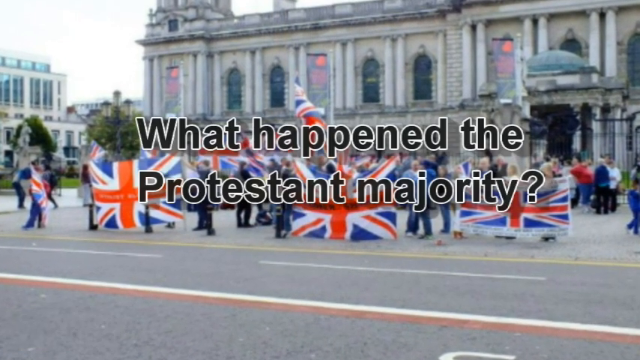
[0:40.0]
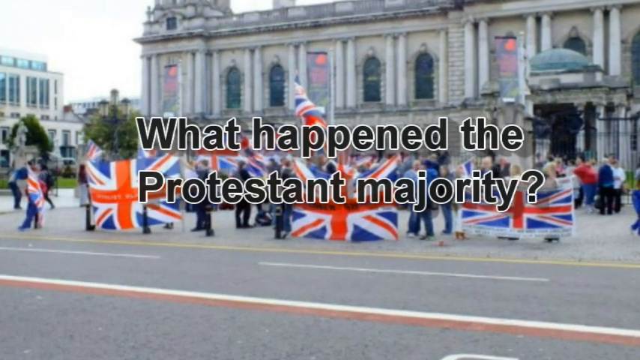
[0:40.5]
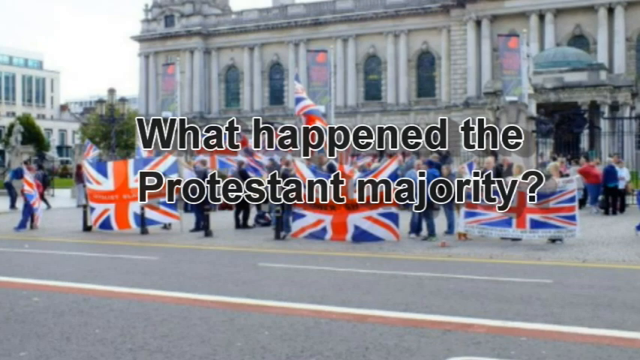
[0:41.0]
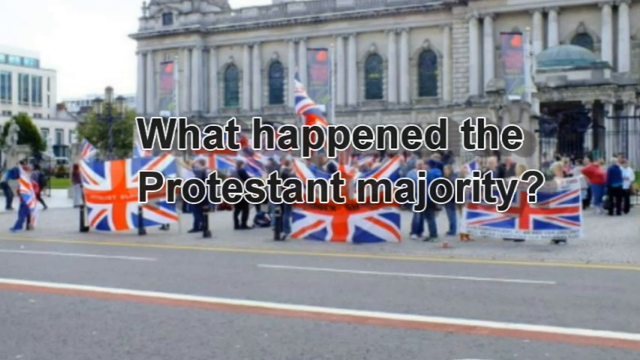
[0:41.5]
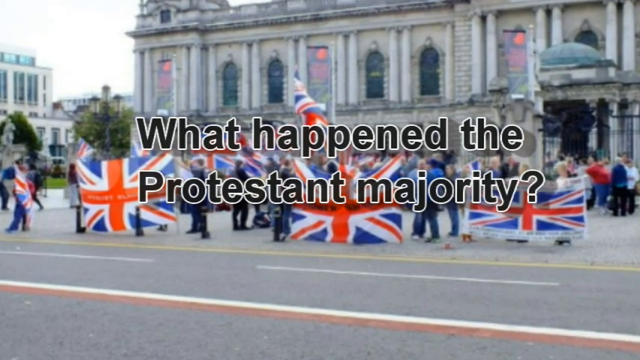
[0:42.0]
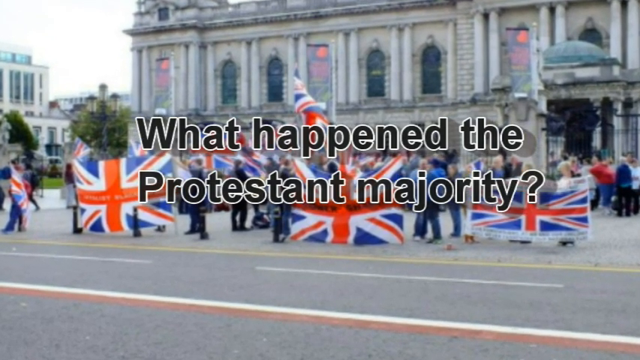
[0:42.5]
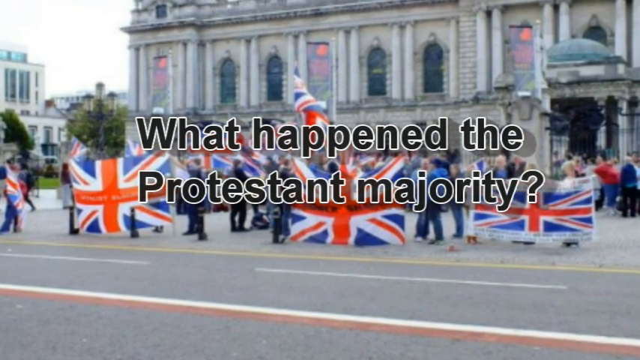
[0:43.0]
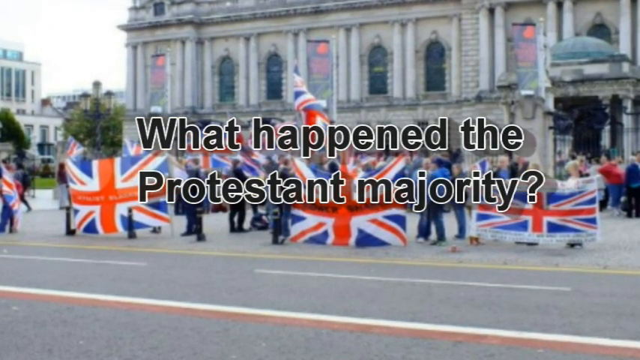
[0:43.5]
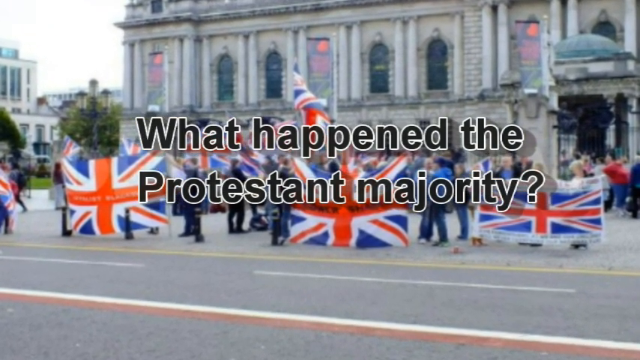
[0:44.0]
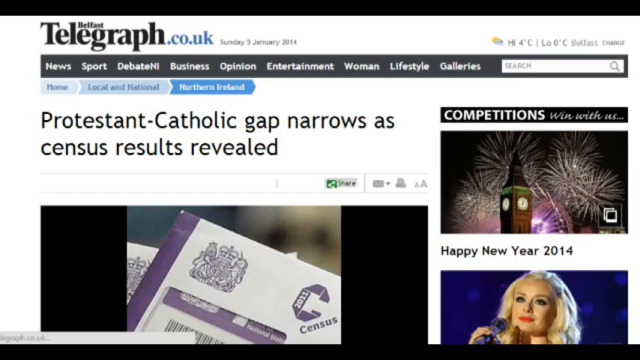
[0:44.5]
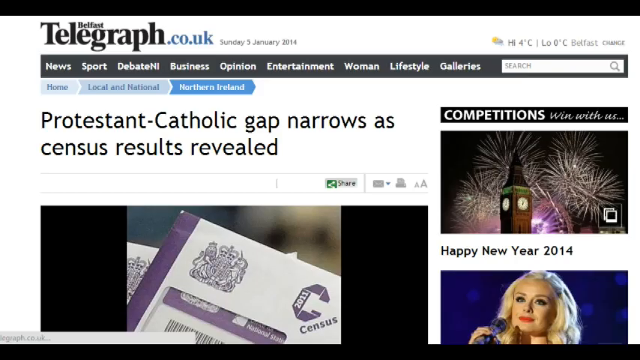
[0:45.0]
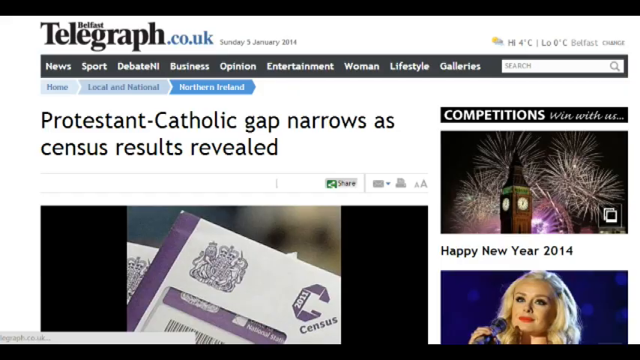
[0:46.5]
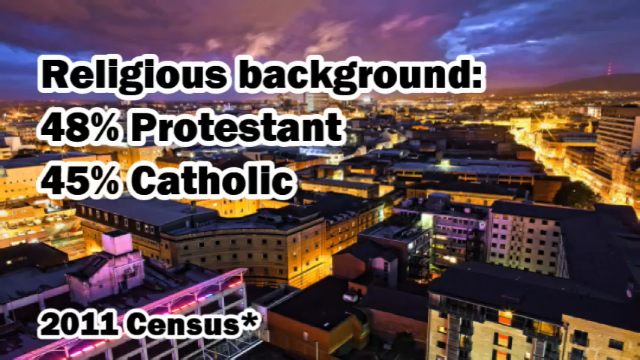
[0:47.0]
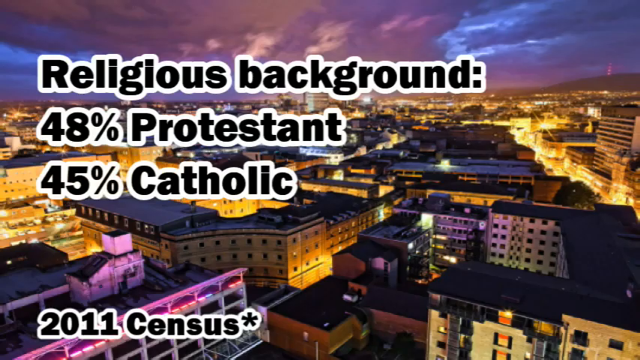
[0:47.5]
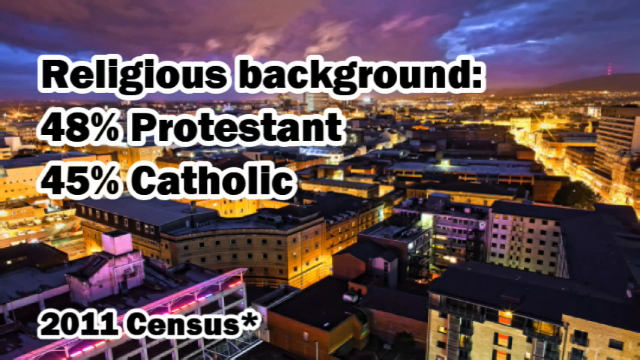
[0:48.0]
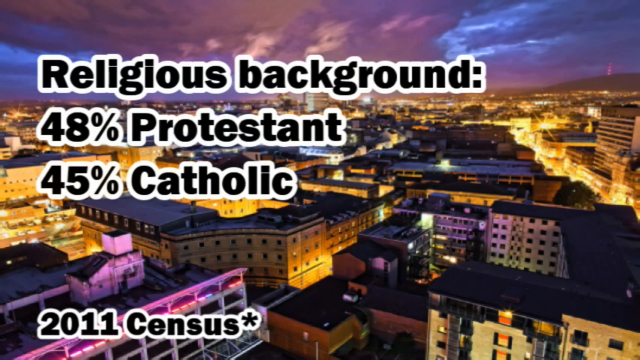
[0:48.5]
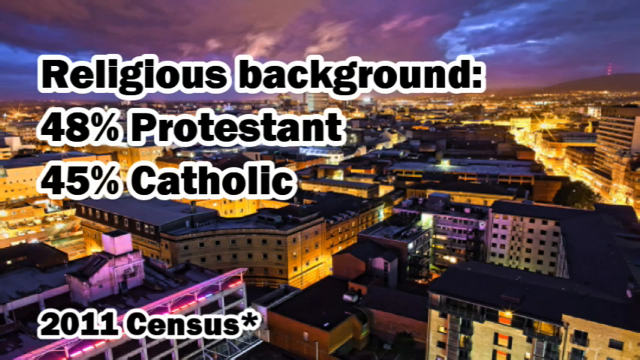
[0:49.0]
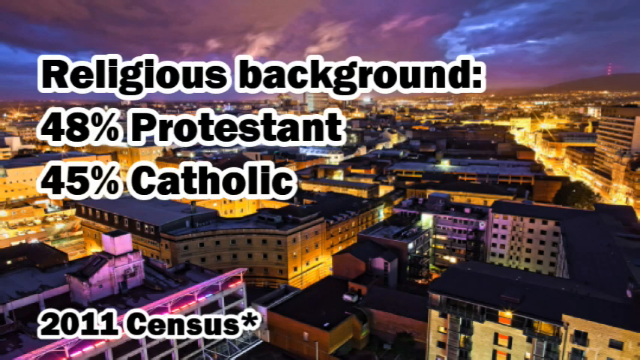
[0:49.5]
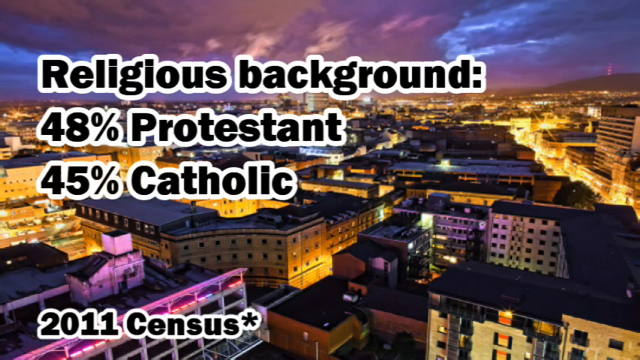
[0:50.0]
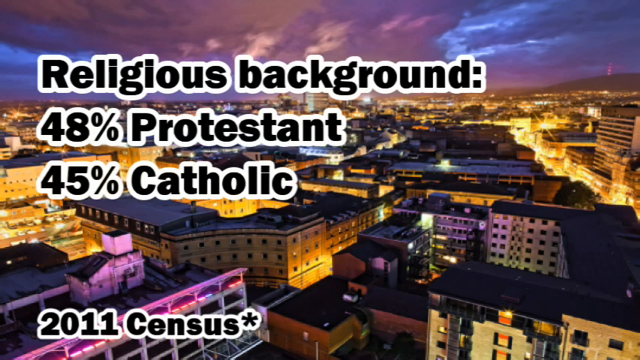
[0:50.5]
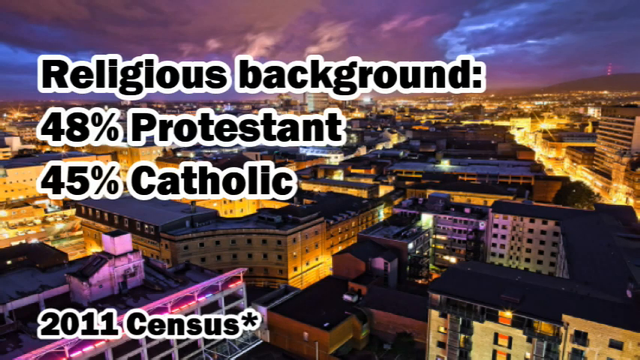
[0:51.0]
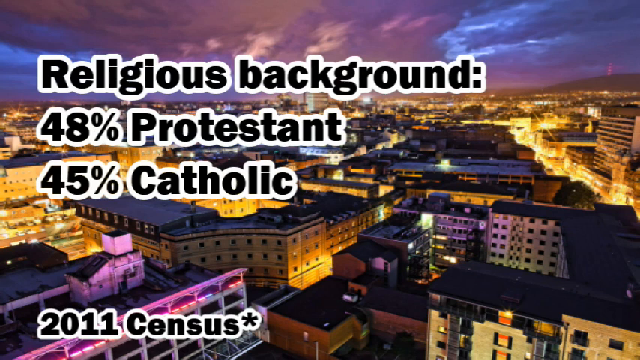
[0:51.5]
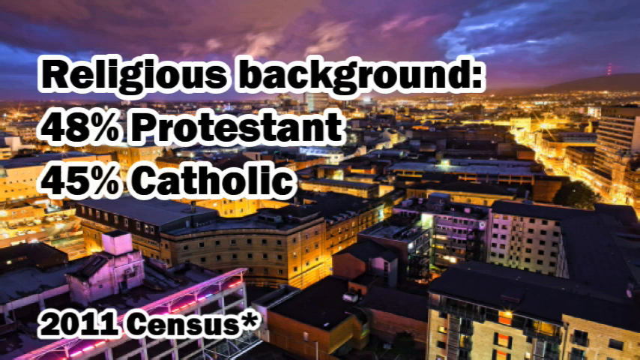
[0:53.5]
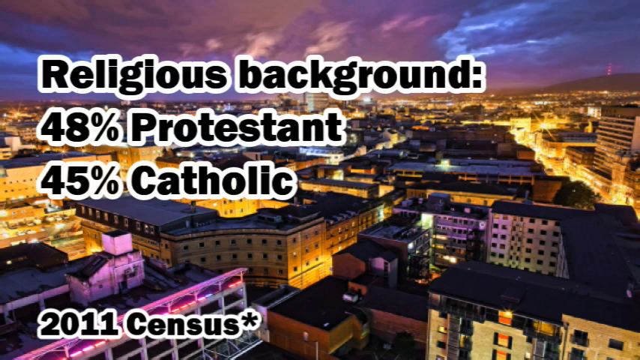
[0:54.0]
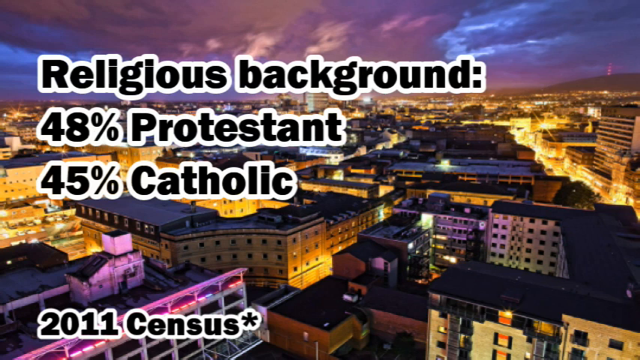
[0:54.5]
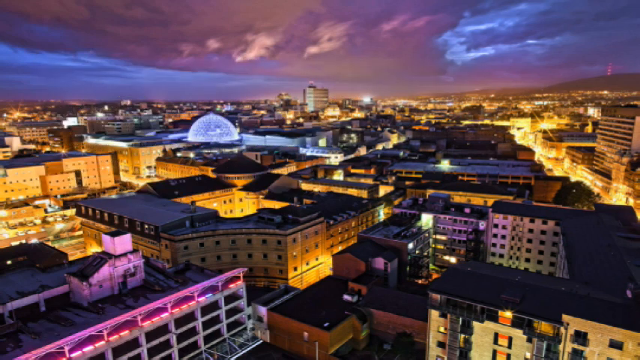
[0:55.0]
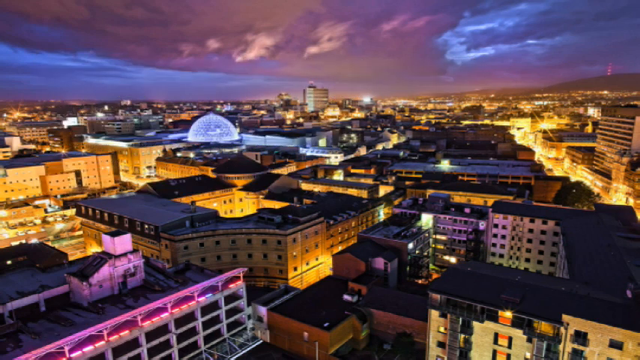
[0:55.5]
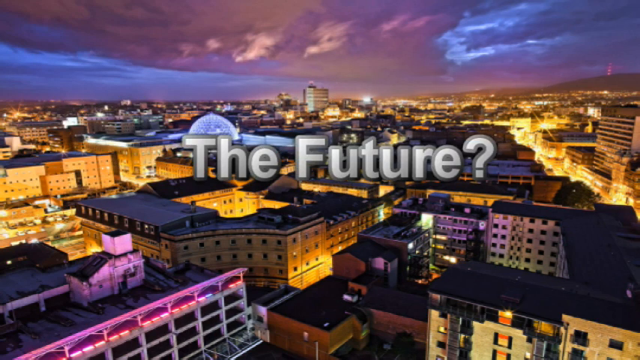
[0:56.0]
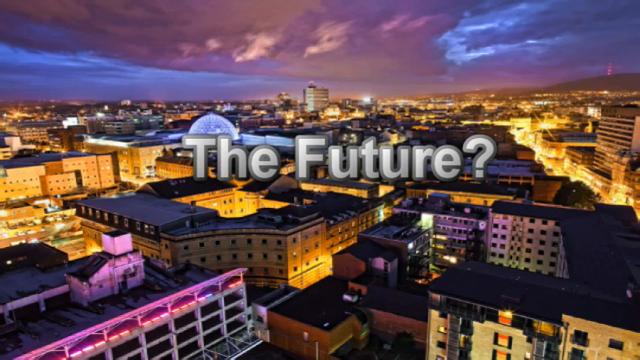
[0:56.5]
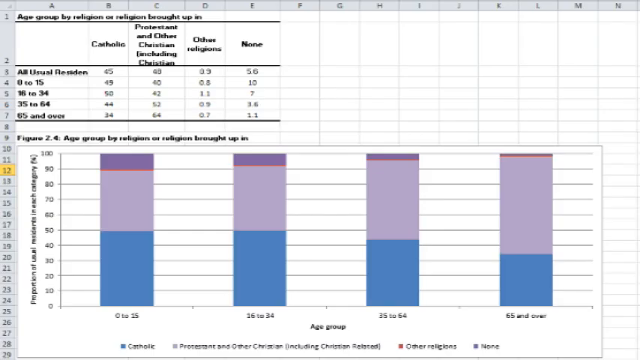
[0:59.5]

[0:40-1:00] The camera zooms in on a color still photo in England with a palace in the background, next to a street, where people are holding several life-size British flags as banners. Text on the screen, placed on top of the photo, reads "what happened the Protestant majority", with the word "to" missing. The video then shows a website from belfasttelegraph.co.uk dated January 2014, with text about the Protestant-Catholic gap narrowing. Next is a photo taken at night from high up in the sky of a bunch of buildings, probably somewhere in the UK, with words on the screen giving statistics about Protestants and Catholics from a 2011 census.